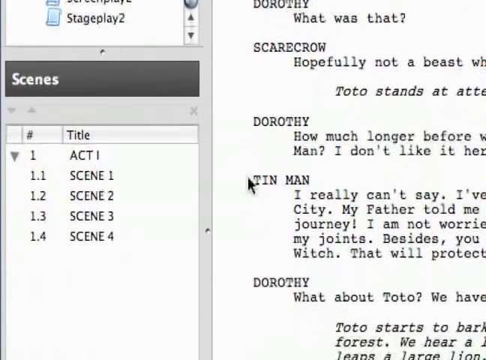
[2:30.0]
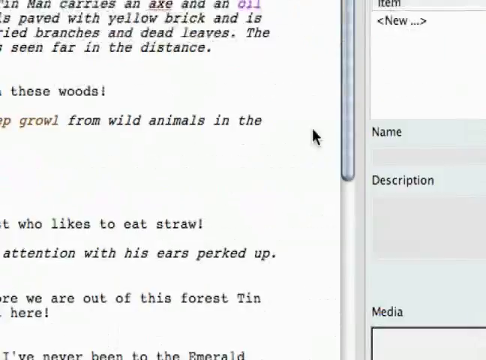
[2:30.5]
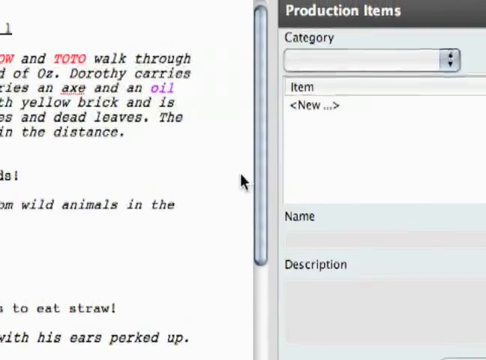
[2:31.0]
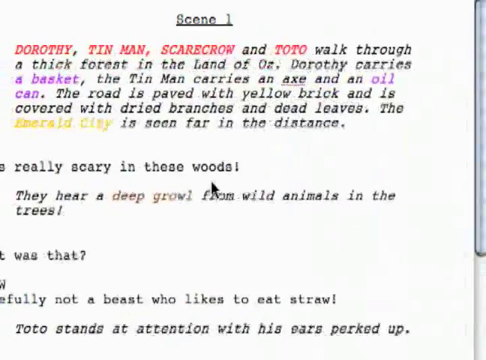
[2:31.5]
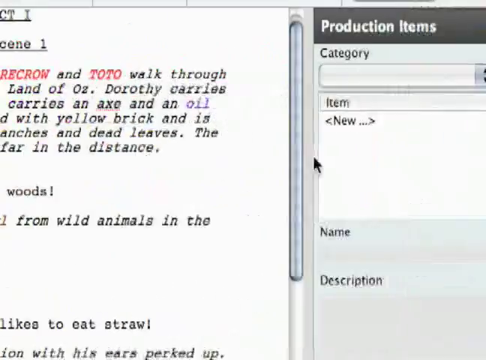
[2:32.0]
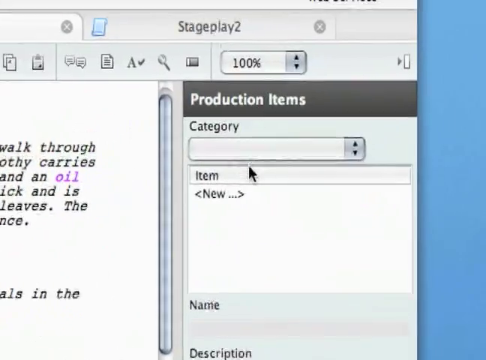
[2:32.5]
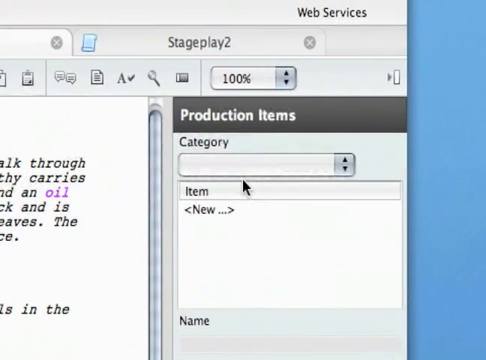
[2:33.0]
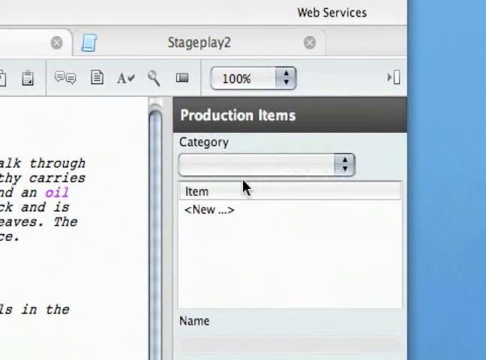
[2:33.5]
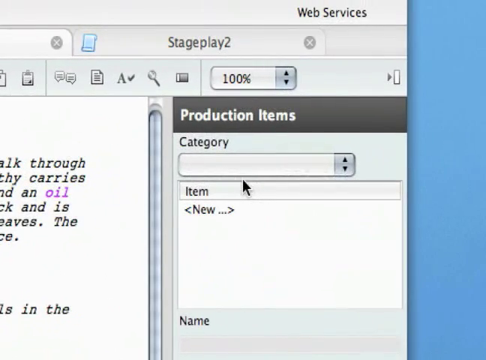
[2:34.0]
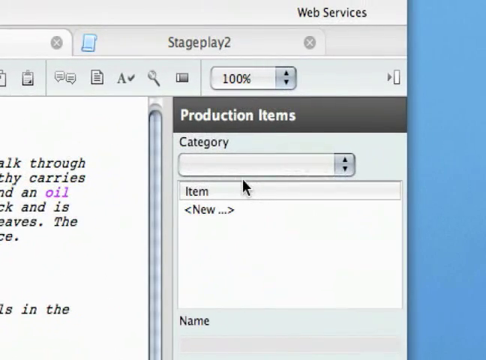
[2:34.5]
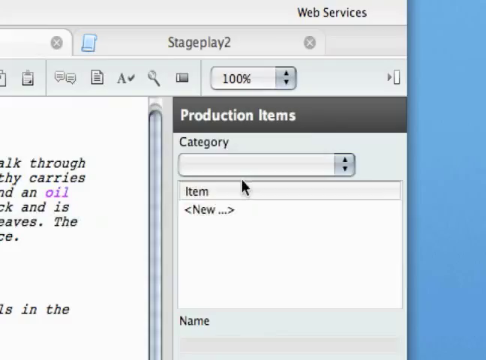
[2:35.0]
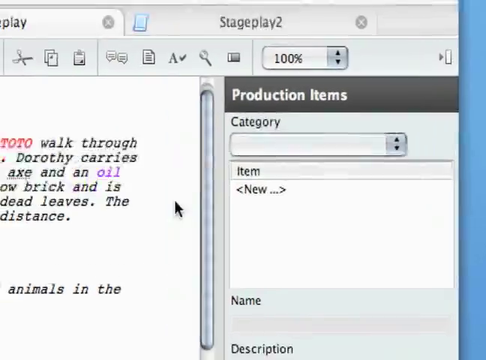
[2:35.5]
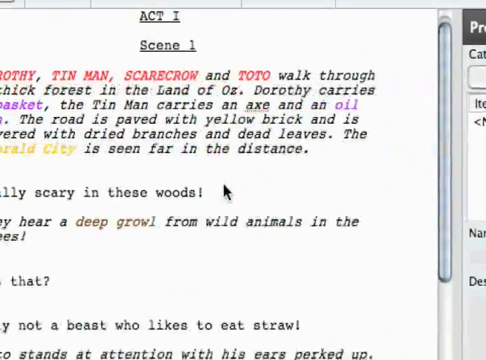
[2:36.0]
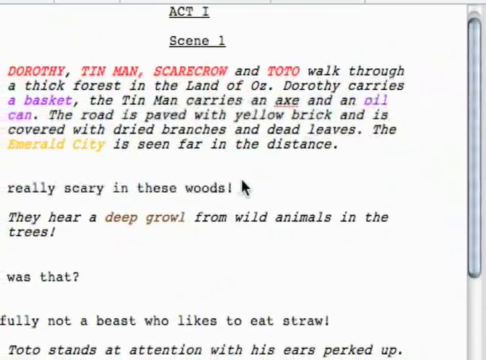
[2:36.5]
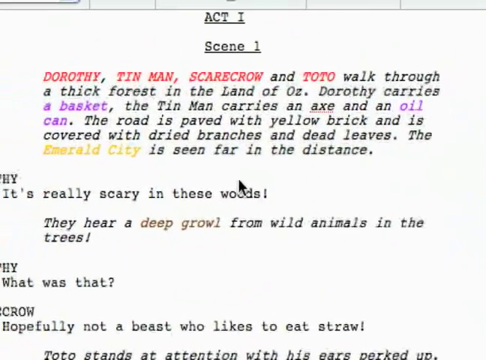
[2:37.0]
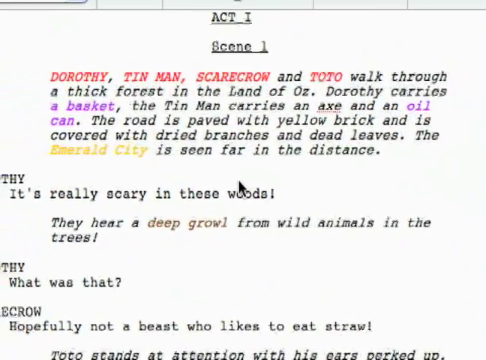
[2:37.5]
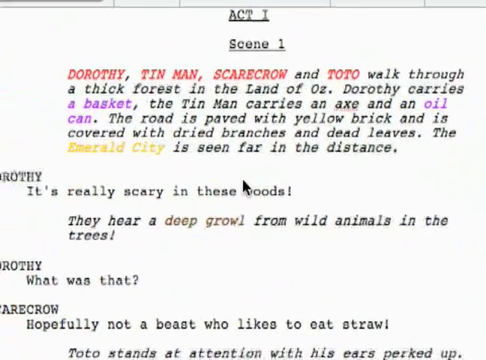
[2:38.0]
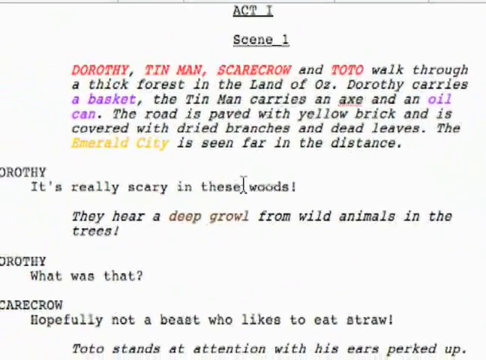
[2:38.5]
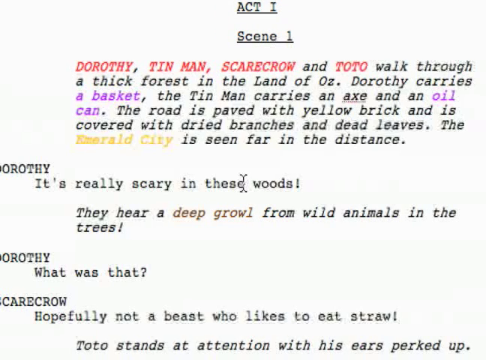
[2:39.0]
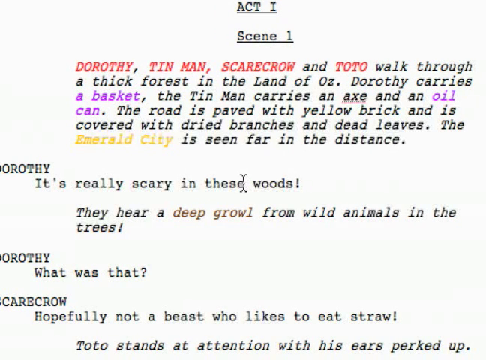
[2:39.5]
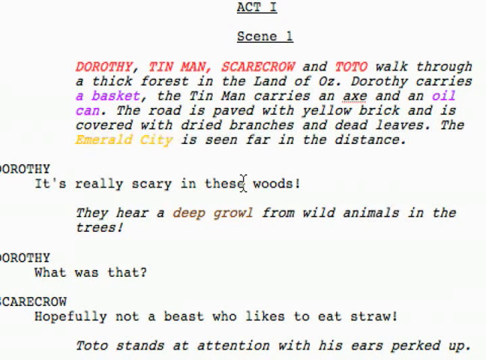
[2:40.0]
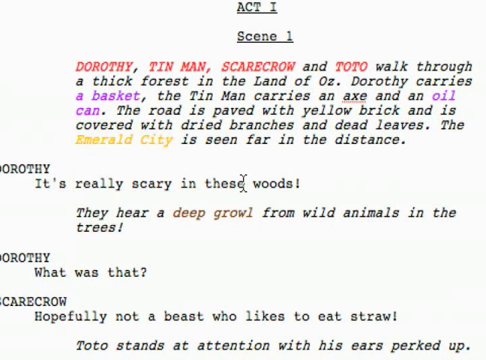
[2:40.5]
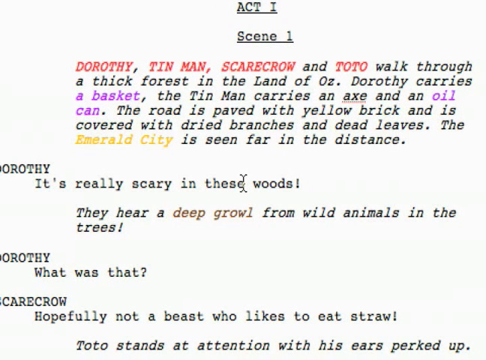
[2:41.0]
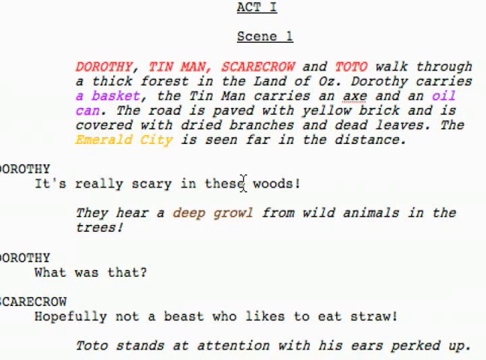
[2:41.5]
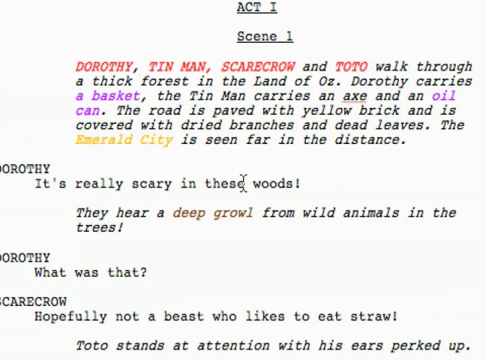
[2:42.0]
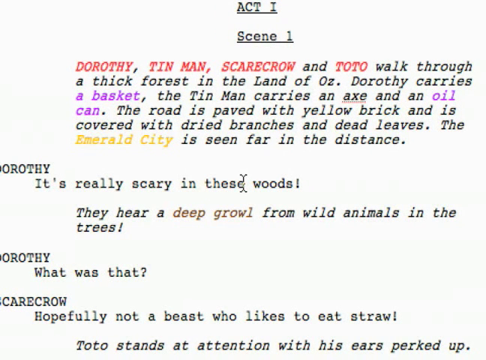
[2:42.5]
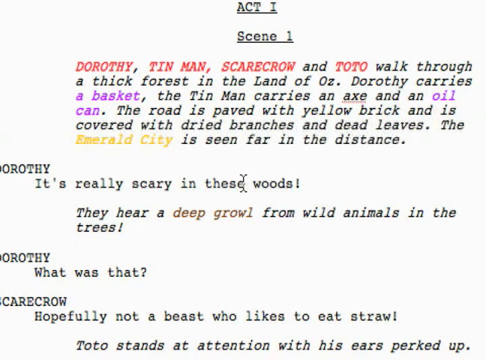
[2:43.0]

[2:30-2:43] The cursor and camera move to the far right, showing a sidebar for production items, category, and various other sub-windows and sub-sections. The view moves back to the stage play script, then back to the production items section, where the word "category" has another collapsible menu bar underneath it. The cursor and camera then return to the Wizard of Oz script and hover briefly, and the cursor moves to the end of the word "these" in "It's really scary in these woods." The video ends there.